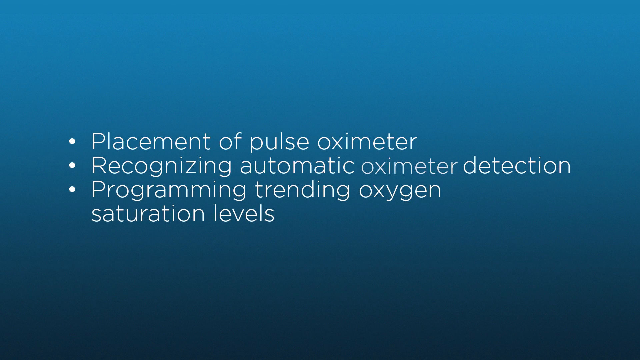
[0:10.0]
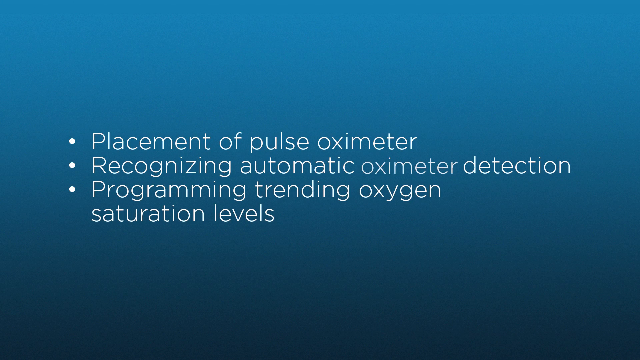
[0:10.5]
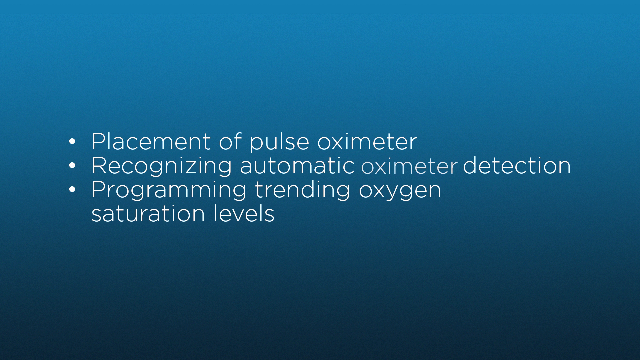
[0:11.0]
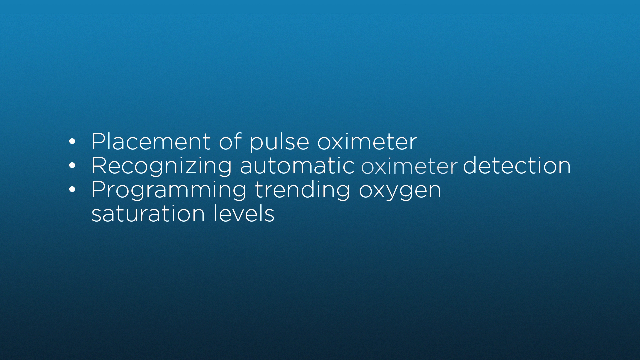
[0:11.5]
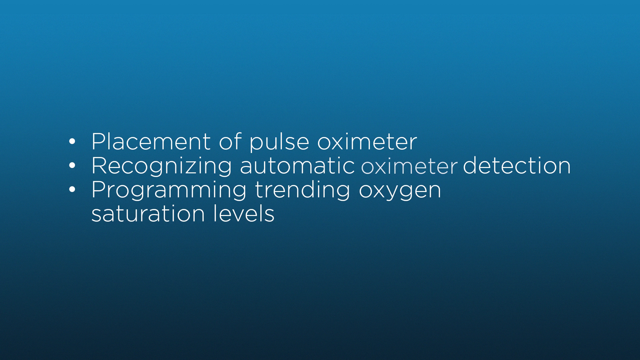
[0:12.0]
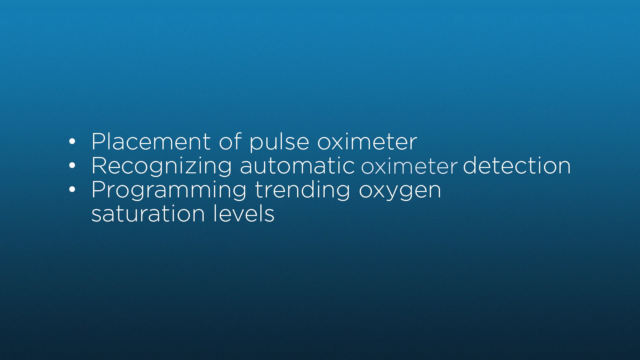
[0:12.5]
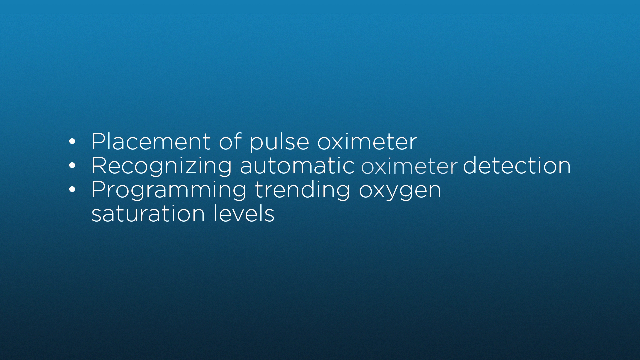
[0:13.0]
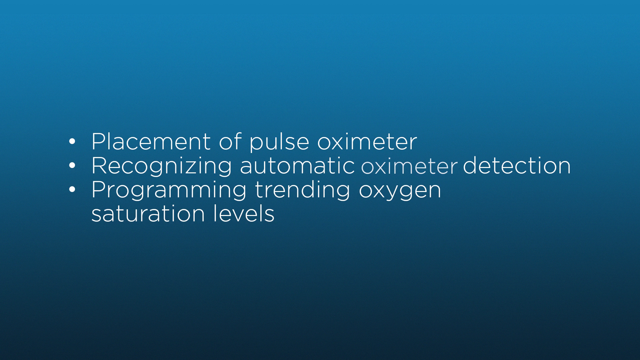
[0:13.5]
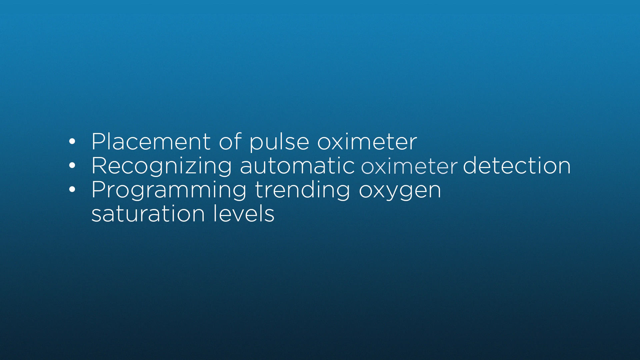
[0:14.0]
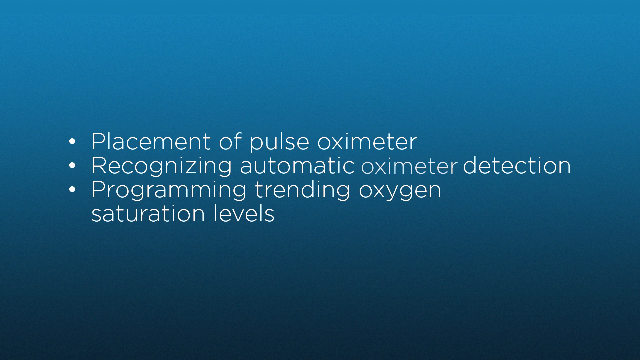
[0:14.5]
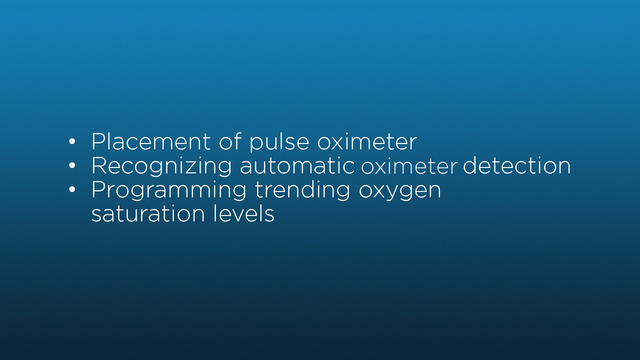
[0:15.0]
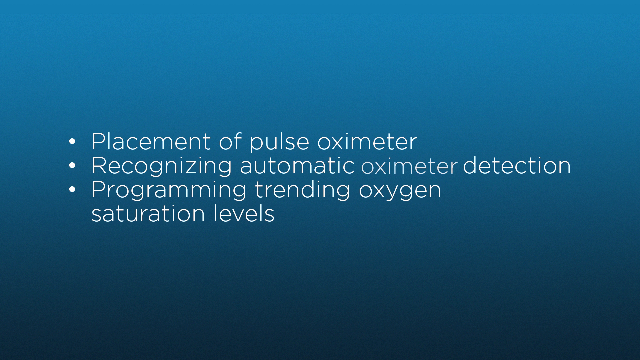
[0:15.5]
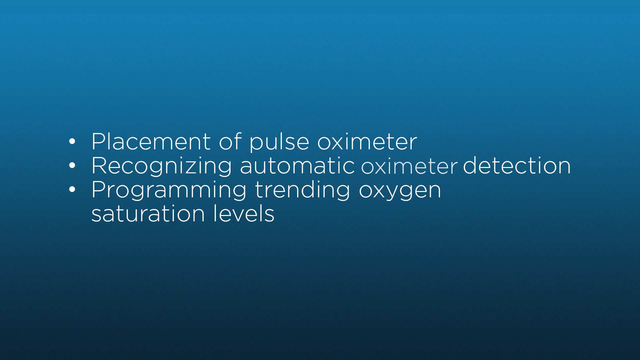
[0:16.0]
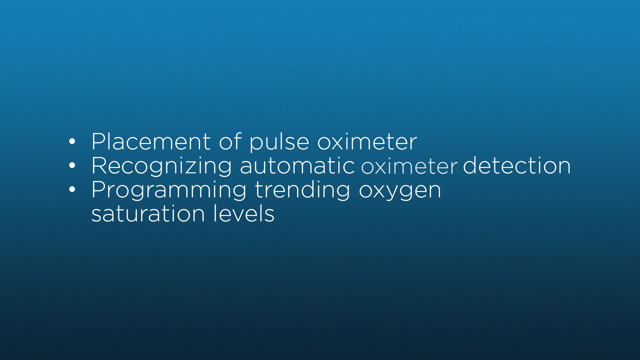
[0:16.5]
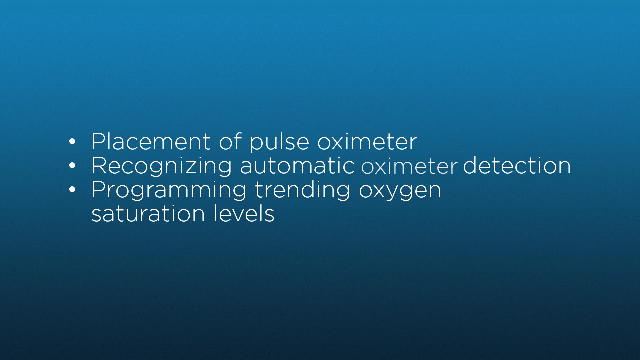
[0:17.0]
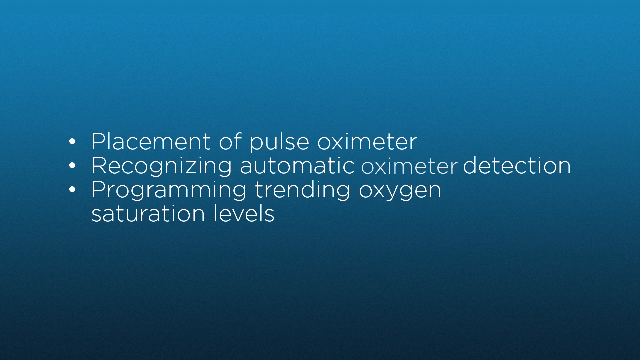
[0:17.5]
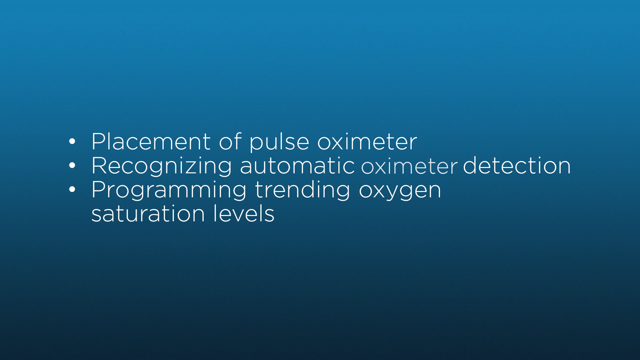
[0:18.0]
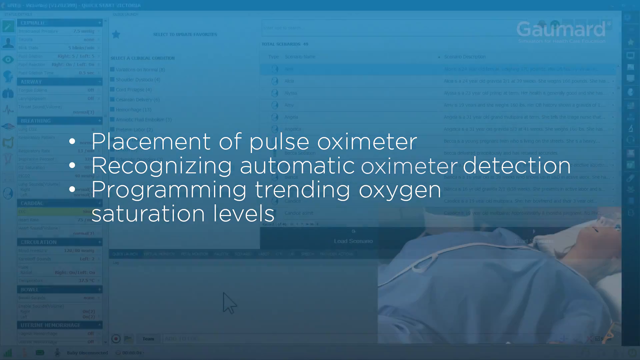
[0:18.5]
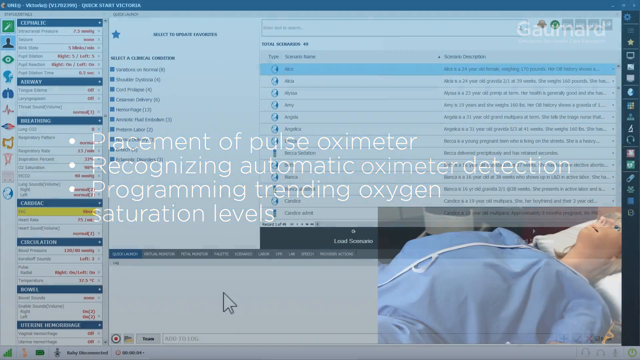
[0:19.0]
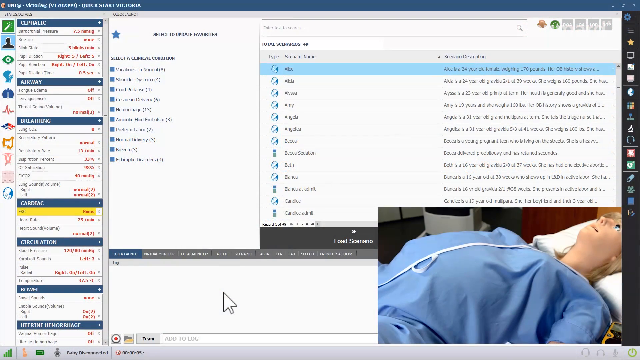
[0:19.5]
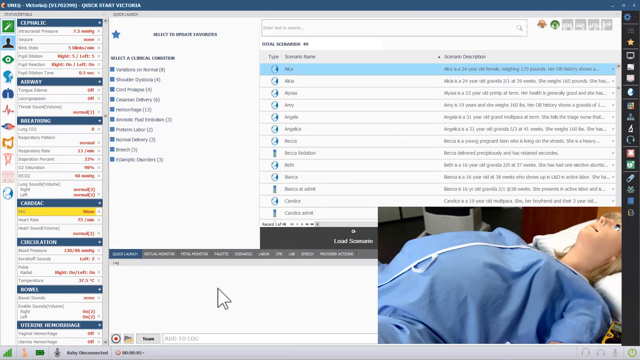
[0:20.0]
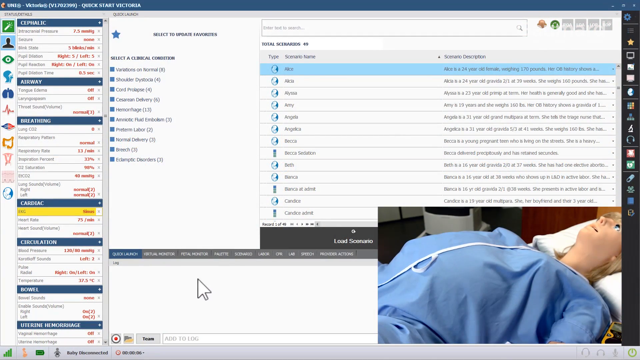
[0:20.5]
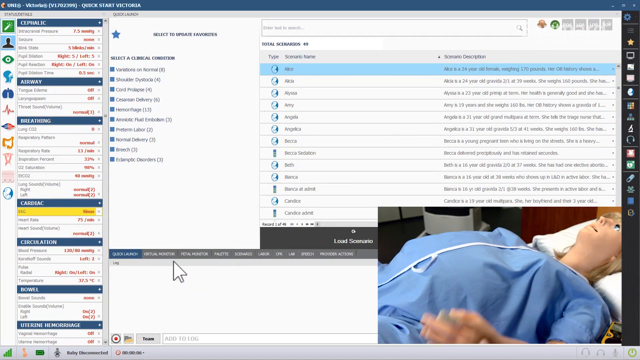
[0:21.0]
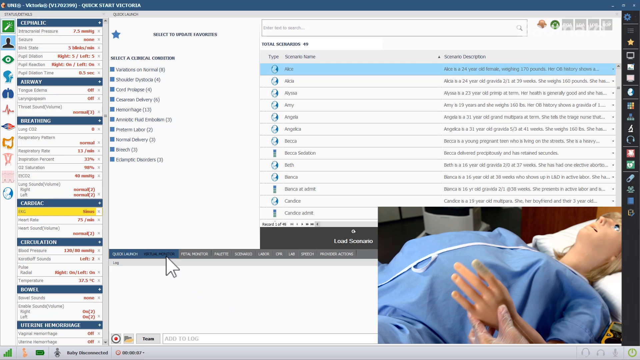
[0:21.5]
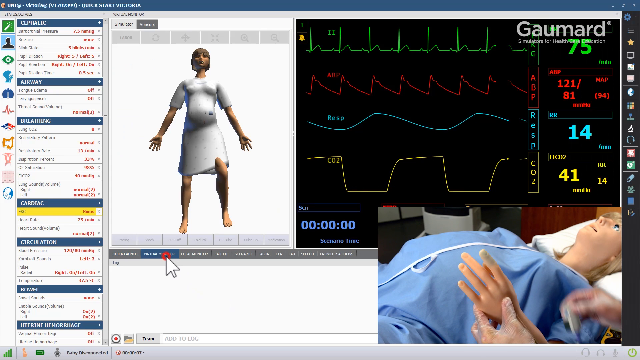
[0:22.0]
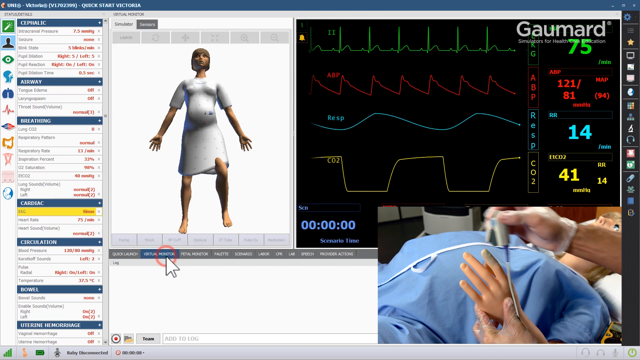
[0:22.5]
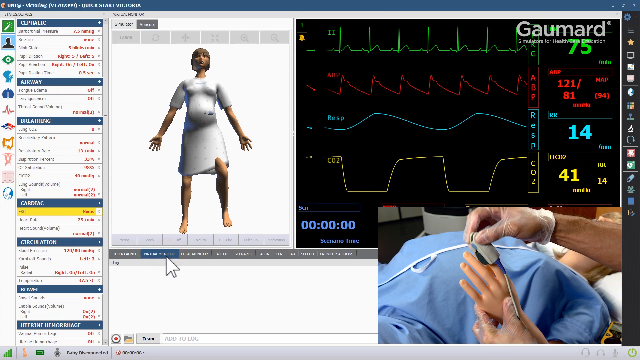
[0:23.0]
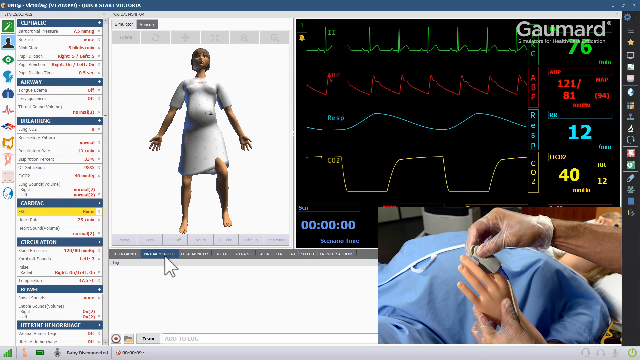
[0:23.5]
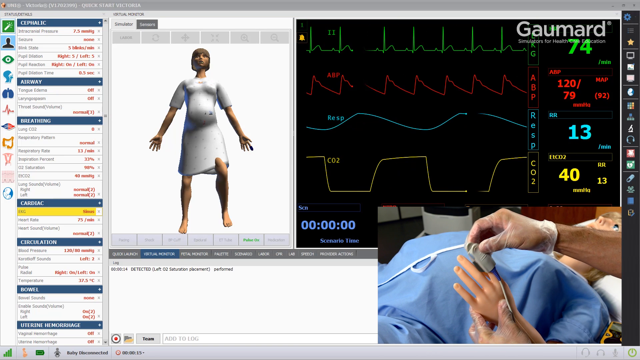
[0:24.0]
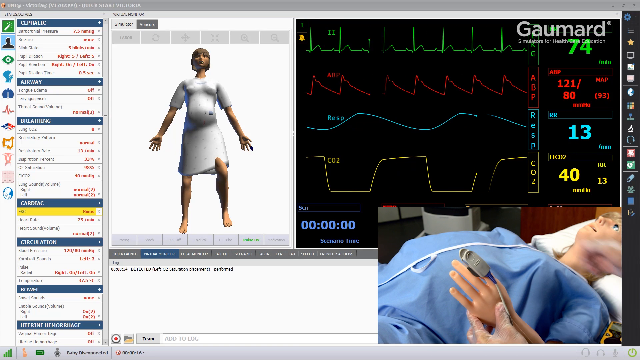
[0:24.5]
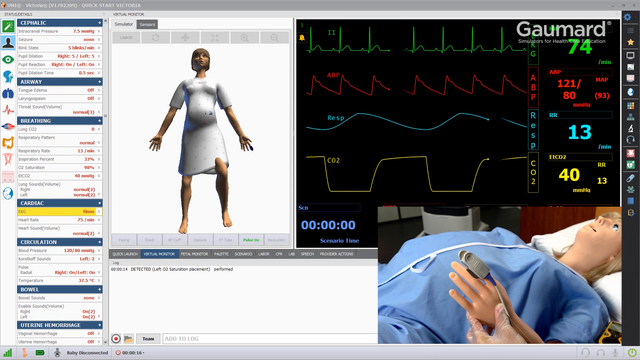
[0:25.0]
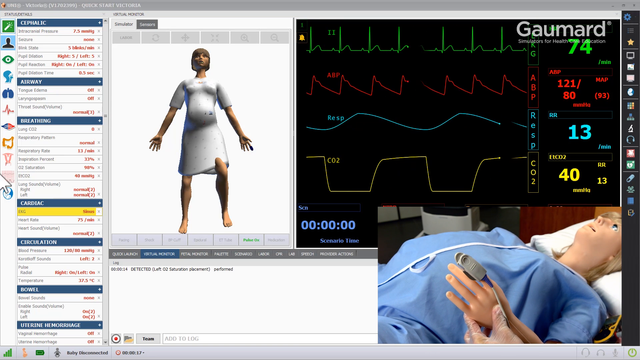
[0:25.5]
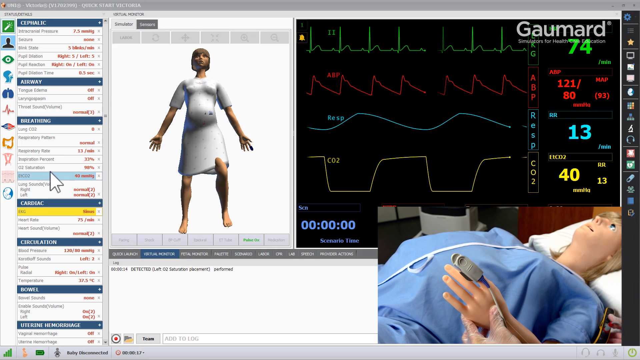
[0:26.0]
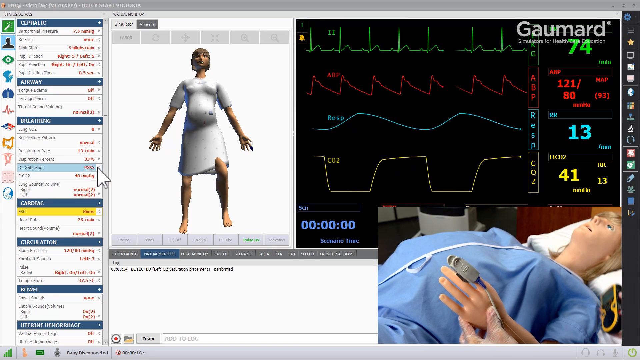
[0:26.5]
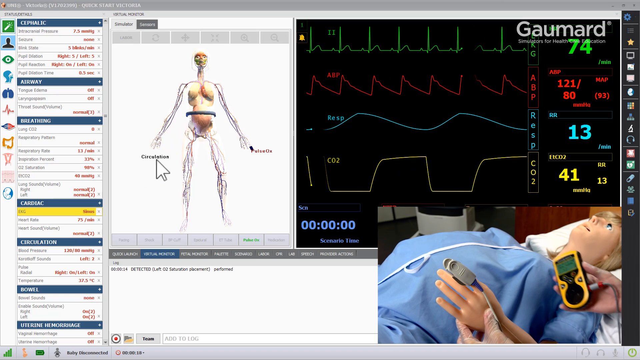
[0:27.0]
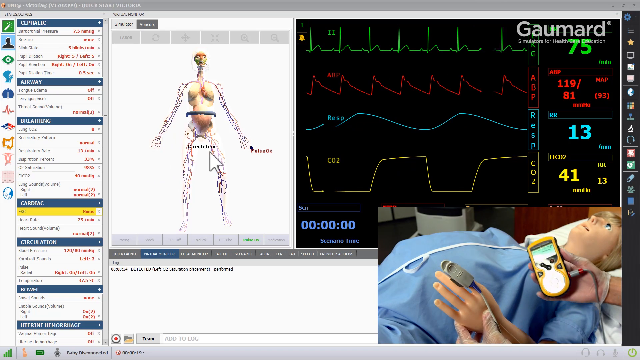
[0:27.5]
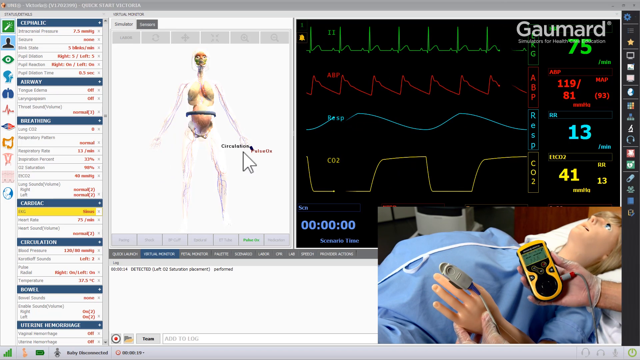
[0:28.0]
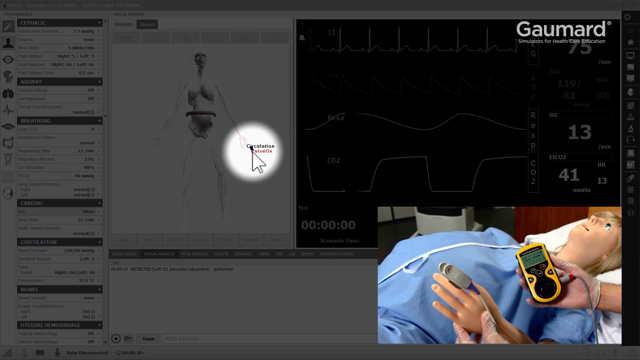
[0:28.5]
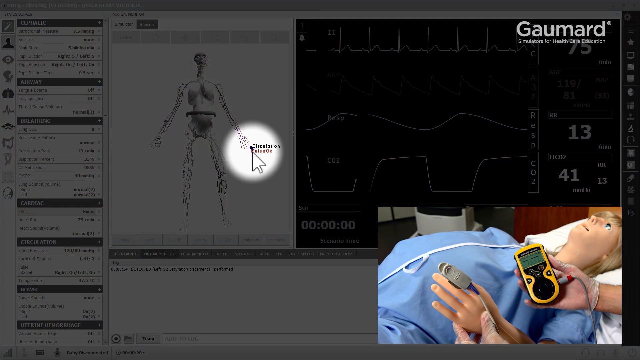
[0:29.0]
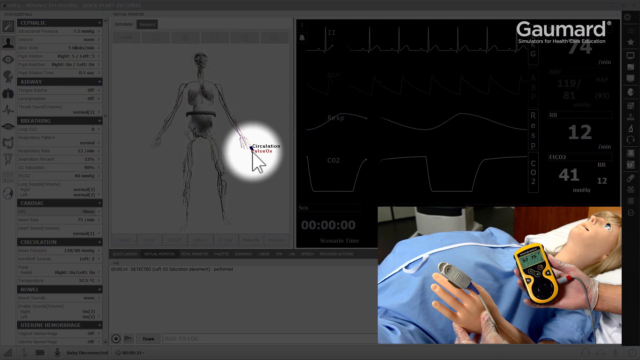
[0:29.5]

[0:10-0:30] The video continues with placement of the pulse oximeter, recognizing automatic oximeter detection, and programming trending oxygen saturation levels, with statistics, information and studies about the equipment shown.